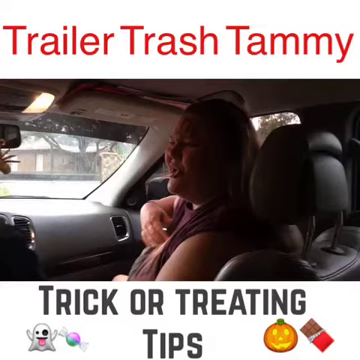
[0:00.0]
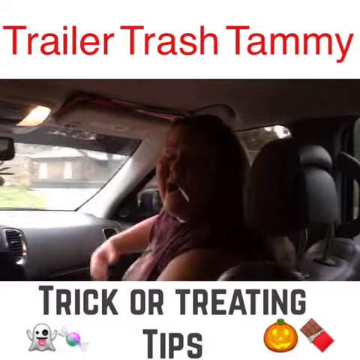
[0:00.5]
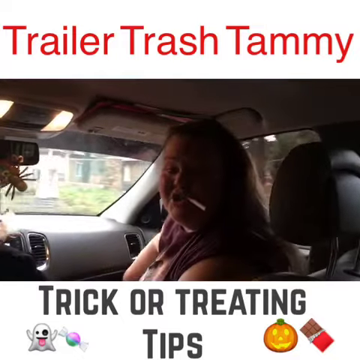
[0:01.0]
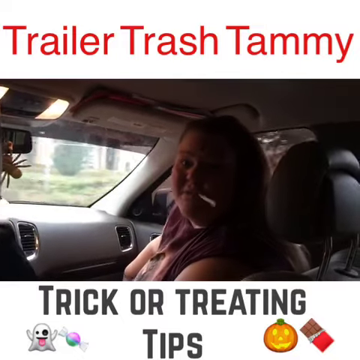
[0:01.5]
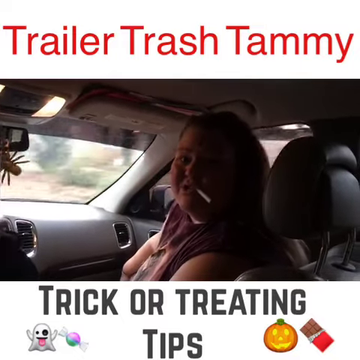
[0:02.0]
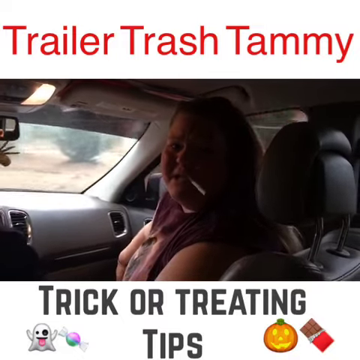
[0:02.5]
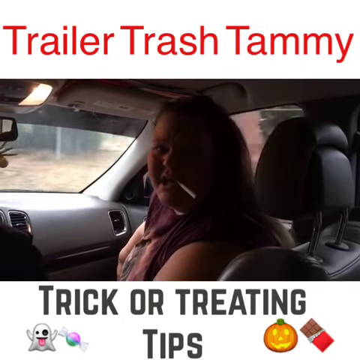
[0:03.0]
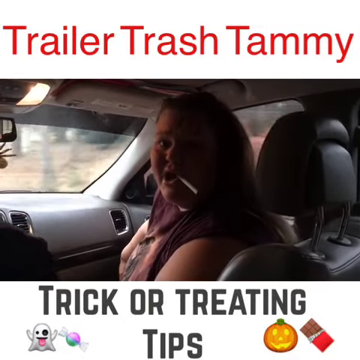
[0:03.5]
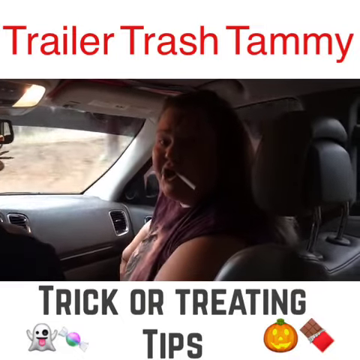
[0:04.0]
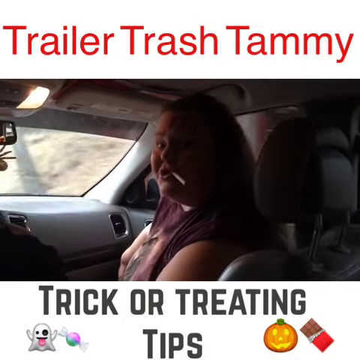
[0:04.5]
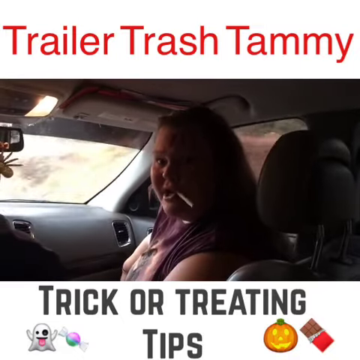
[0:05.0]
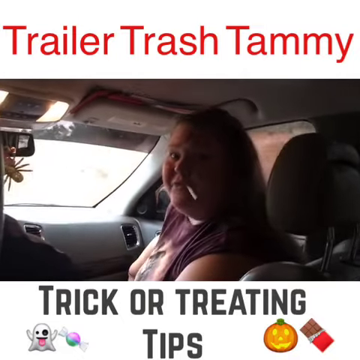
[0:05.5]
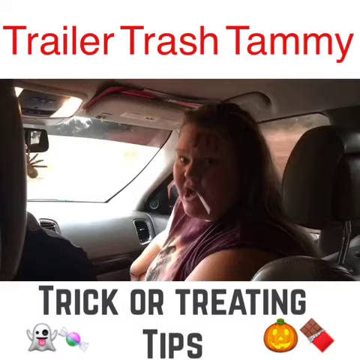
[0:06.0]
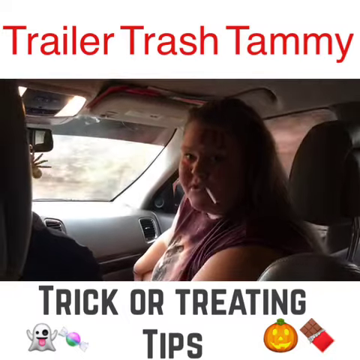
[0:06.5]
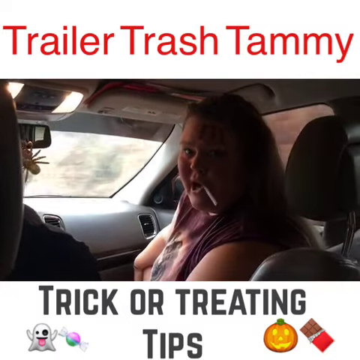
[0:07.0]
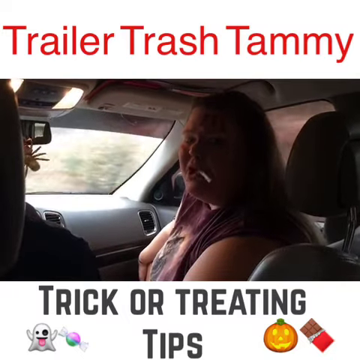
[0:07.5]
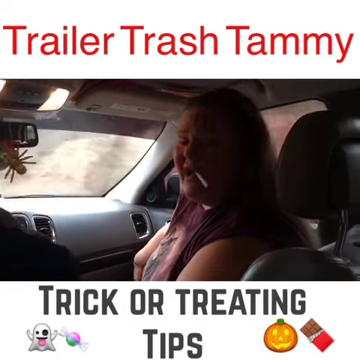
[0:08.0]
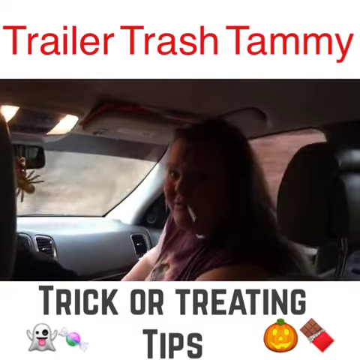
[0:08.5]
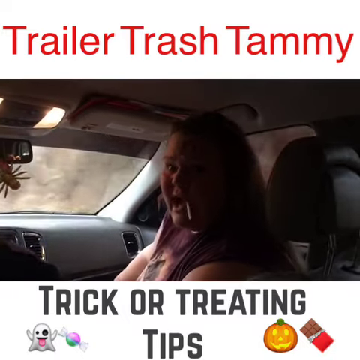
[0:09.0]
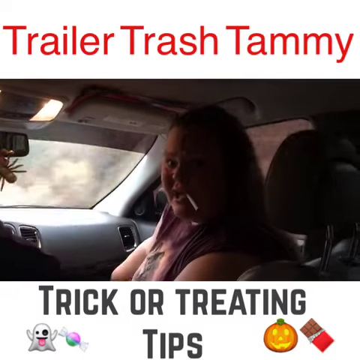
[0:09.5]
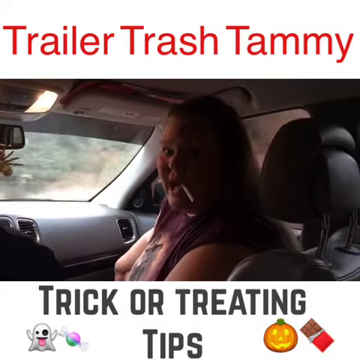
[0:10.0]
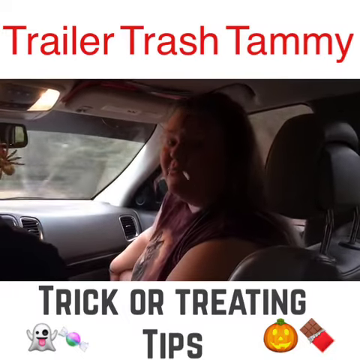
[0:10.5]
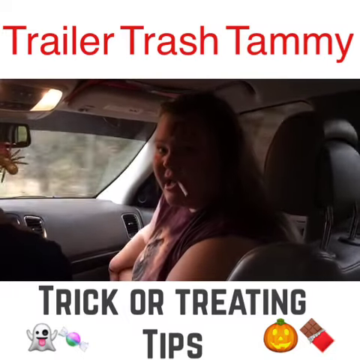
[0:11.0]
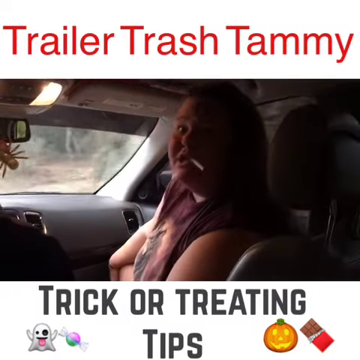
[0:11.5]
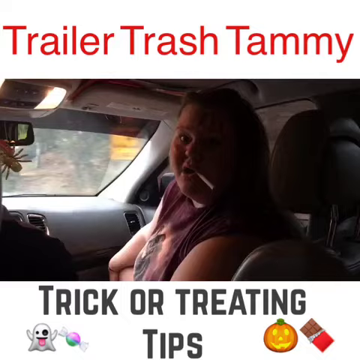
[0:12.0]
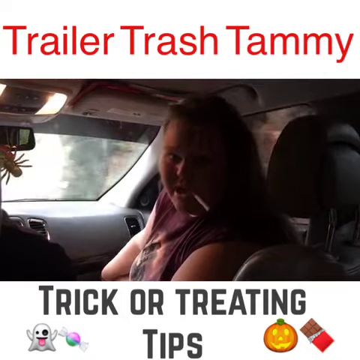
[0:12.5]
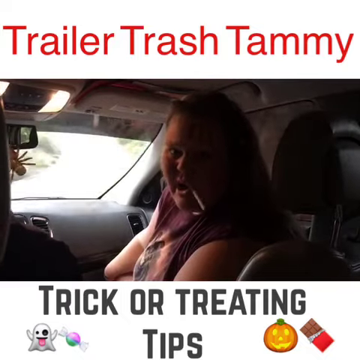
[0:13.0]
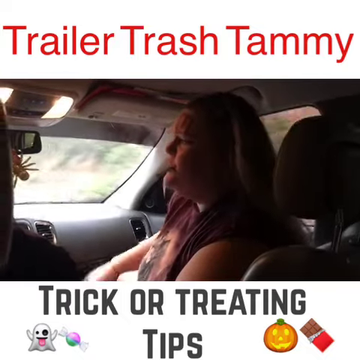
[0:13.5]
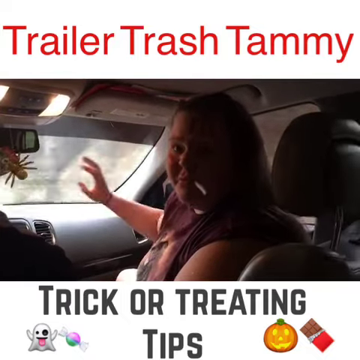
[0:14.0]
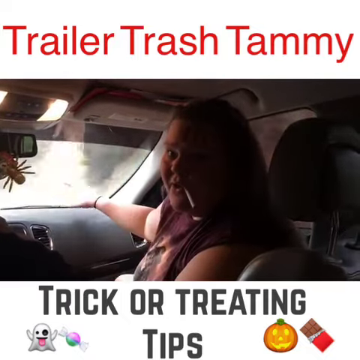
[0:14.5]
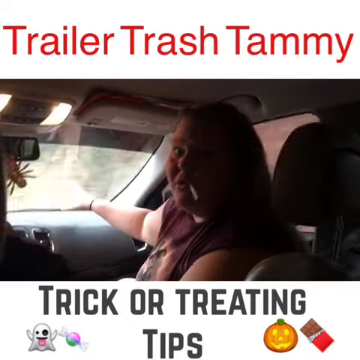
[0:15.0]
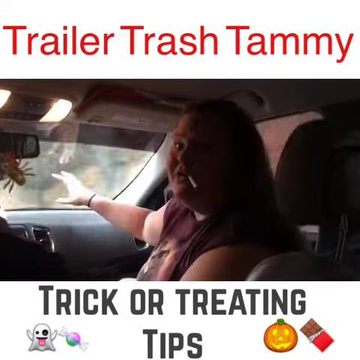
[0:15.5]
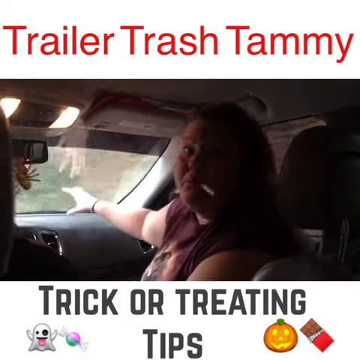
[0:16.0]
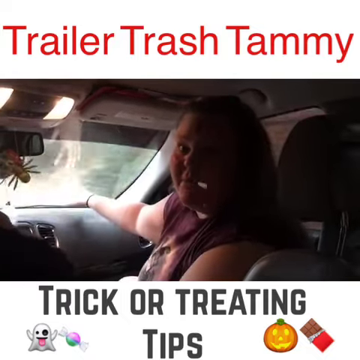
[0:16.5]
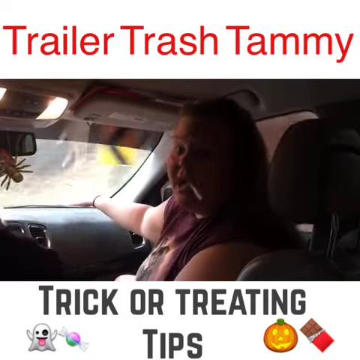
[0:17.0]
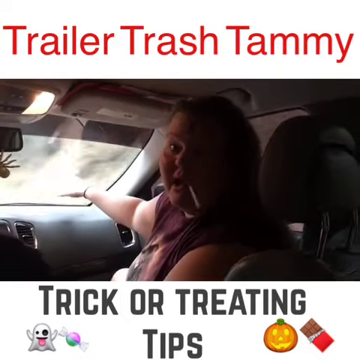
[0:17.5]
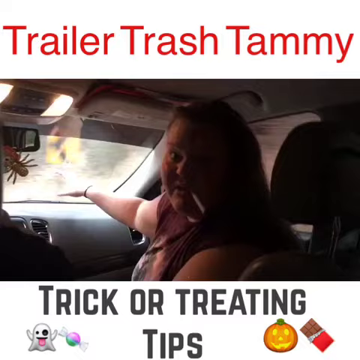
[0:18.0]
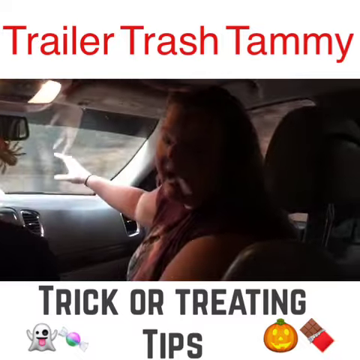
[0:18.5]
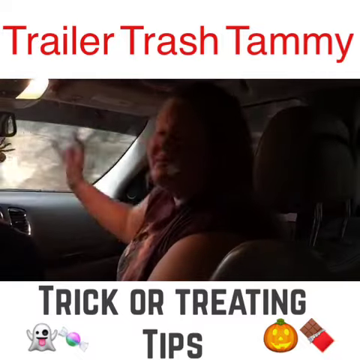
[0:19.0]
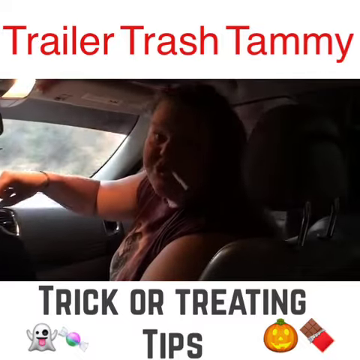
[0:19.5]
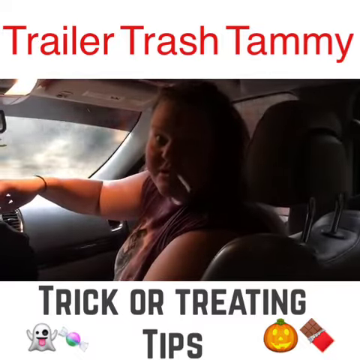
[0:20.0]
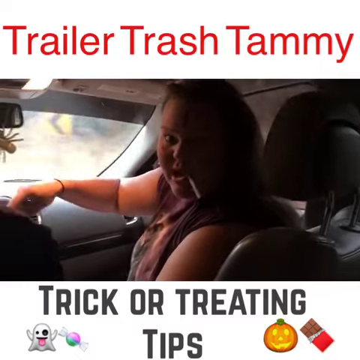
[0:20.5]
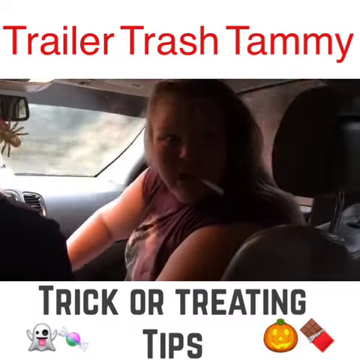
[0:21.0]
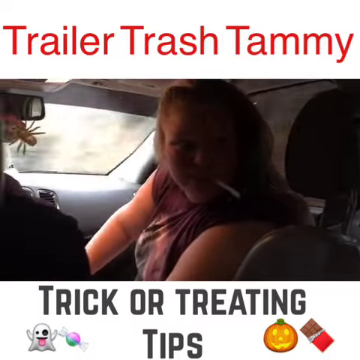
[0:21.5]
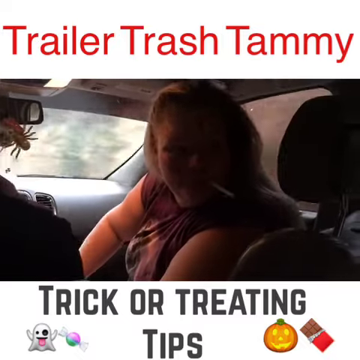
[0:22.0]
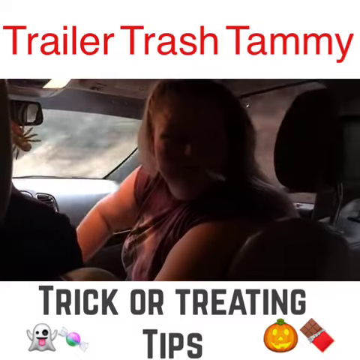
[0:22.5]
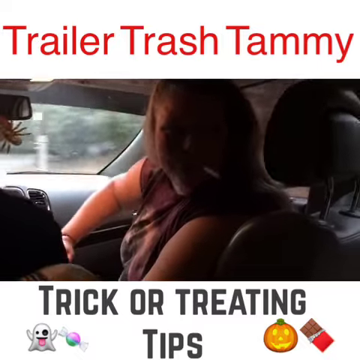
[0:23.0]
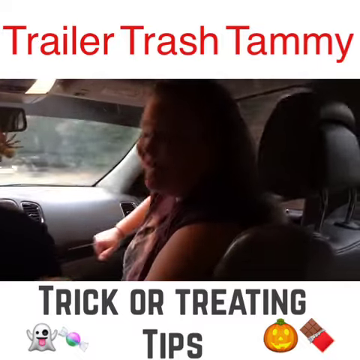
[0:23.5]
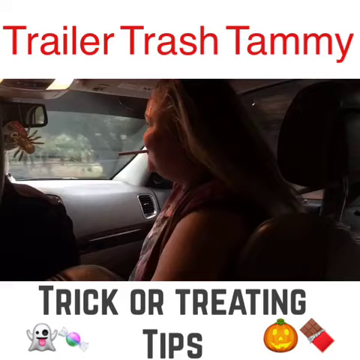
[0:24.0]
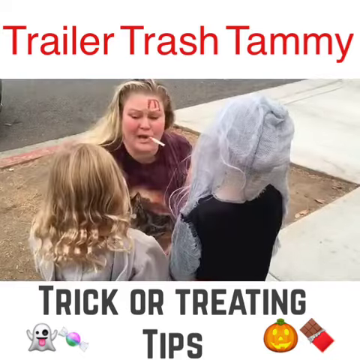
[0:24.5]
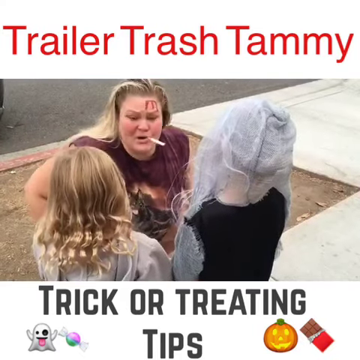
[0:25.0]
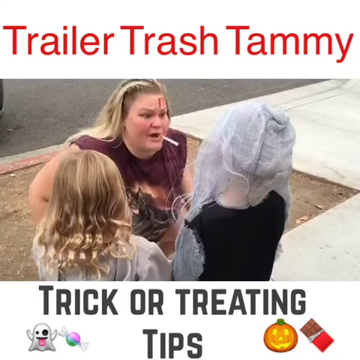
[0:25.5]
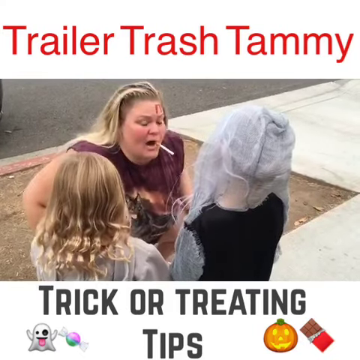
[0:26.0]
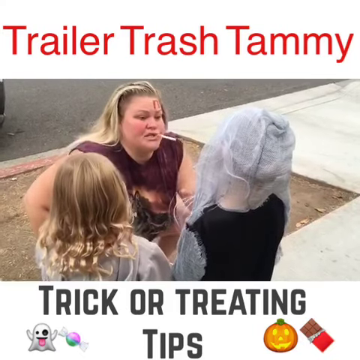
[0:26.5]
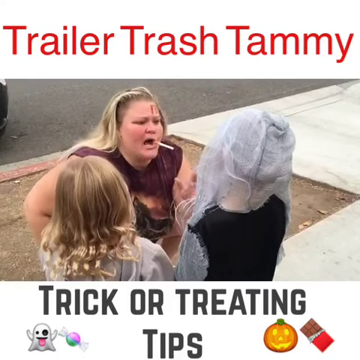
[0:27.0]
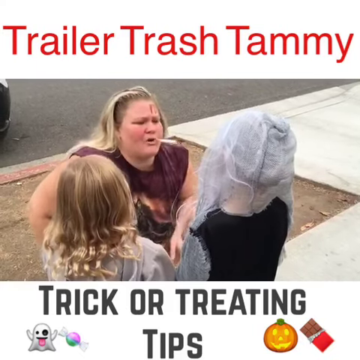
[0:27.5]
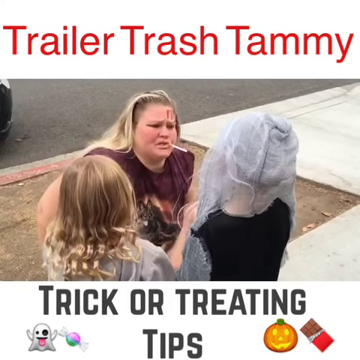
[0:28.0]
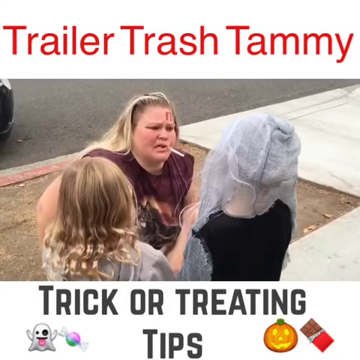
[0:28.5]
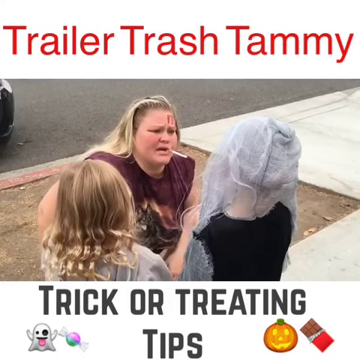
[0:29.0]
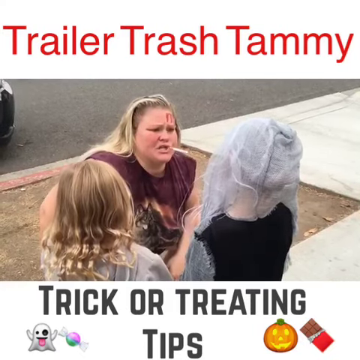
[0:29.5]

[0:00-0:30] Trailer Trash Tammy sits in the front of a vehicle on the passenger side. She looks like she is in distress. She has brown hair, is a very large woman with a full face, and wears a brown sleeveless shirt. She appears to have a cigarette hanging out of the left side of her mouth. She turns around, and it is unclear whether she is speaking into a camera or to someone riding in the backseat who cannot be seen. She raises her right hand and points toward the windshield, looking like she is describing something to the passengers in the backseat. Next, she stands outside on the sidewalk, the cigarette still hanging out of her mouth; it does not even look lit. She talks with the cigarette in her mouth. It is daylight outside. The person driving the car is not visible; only Tammy is seen.